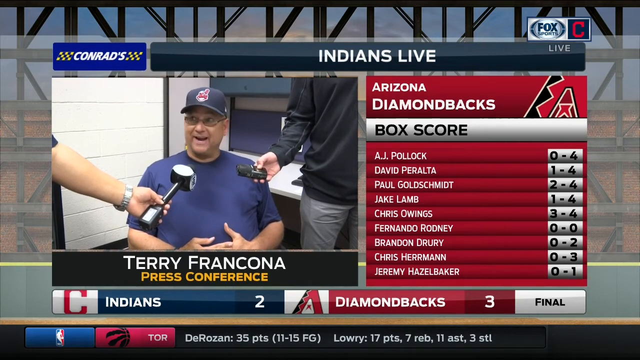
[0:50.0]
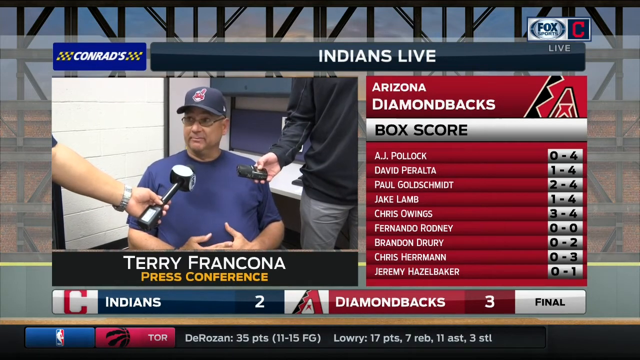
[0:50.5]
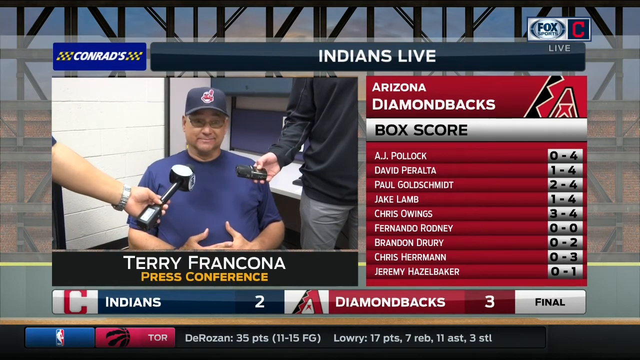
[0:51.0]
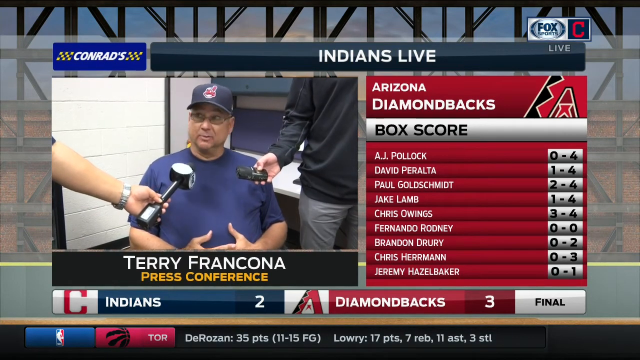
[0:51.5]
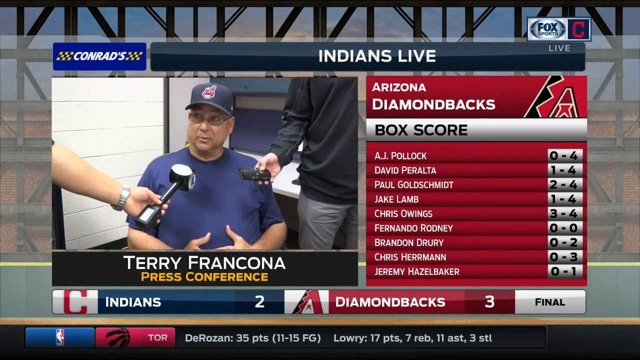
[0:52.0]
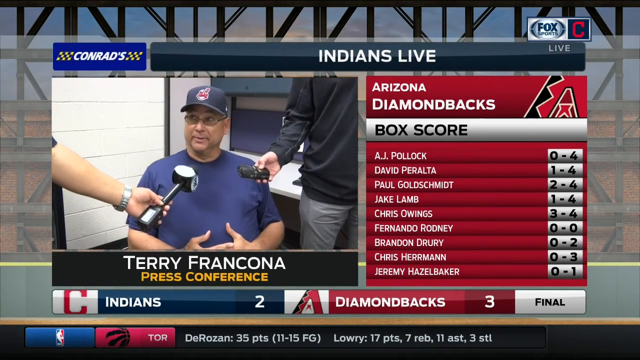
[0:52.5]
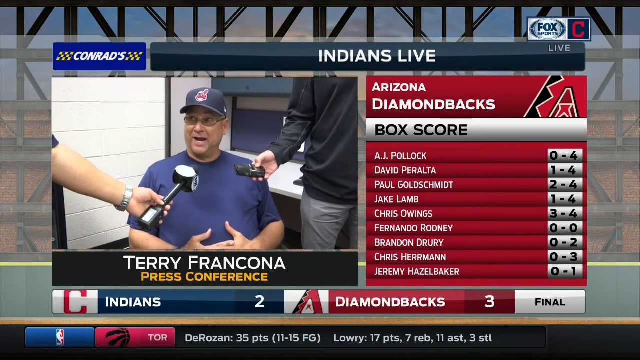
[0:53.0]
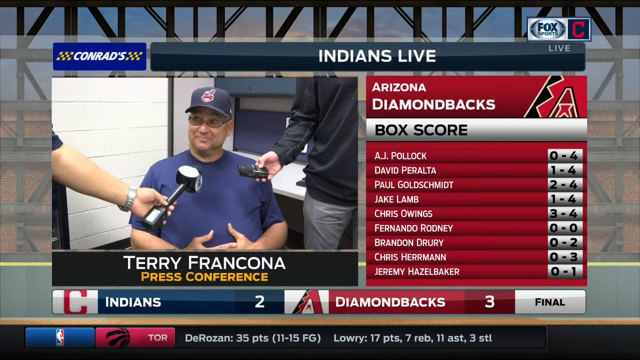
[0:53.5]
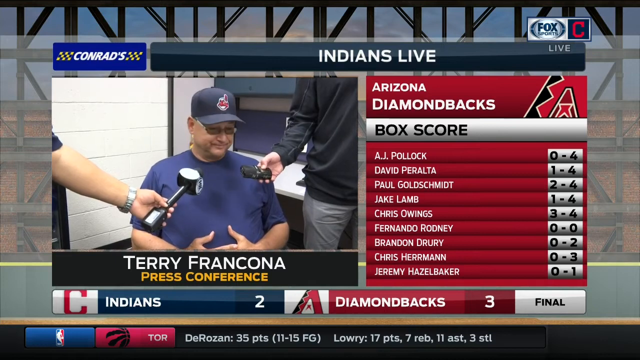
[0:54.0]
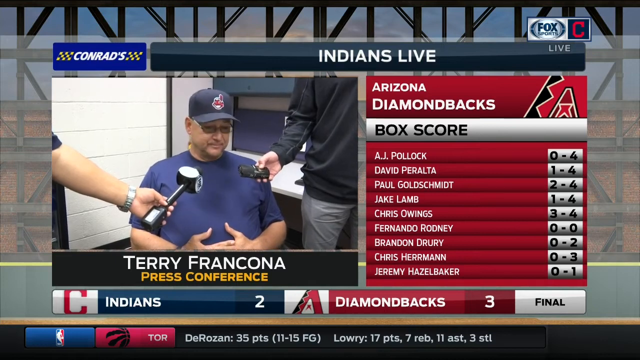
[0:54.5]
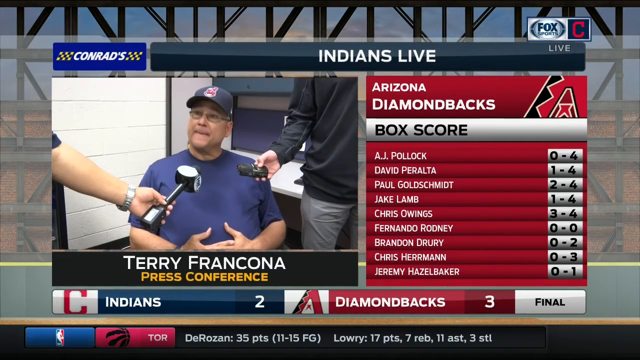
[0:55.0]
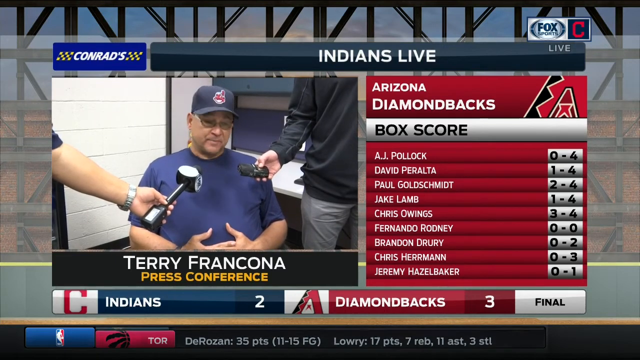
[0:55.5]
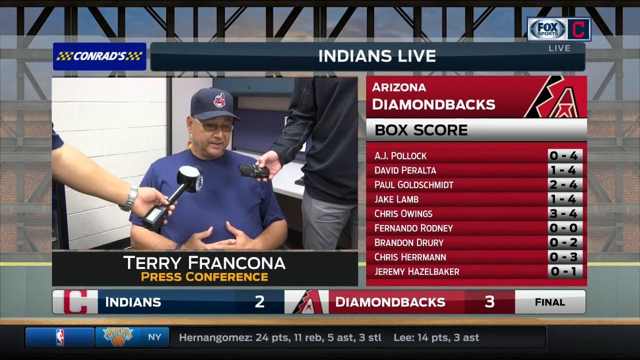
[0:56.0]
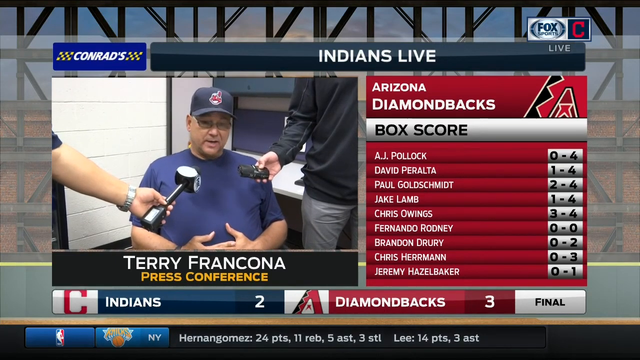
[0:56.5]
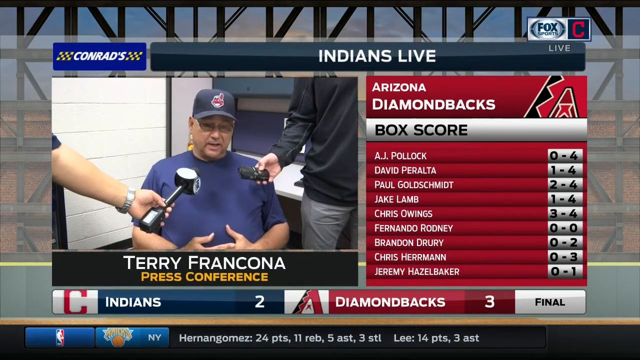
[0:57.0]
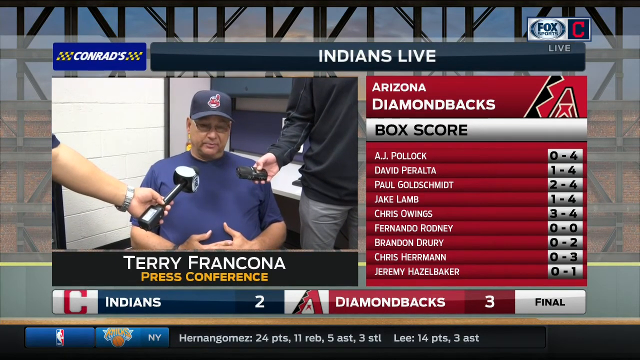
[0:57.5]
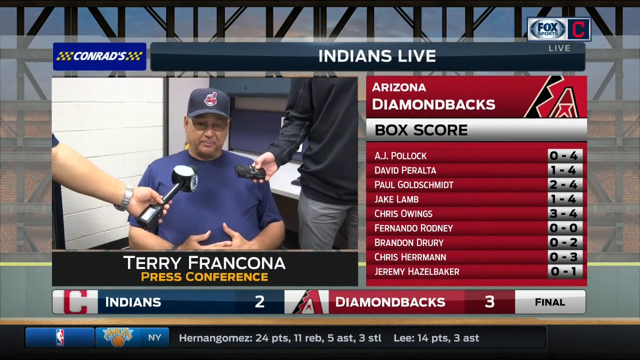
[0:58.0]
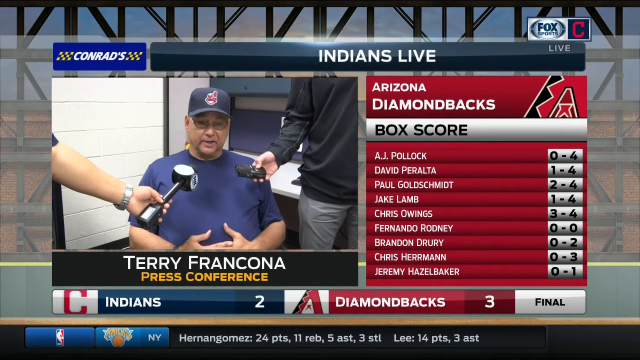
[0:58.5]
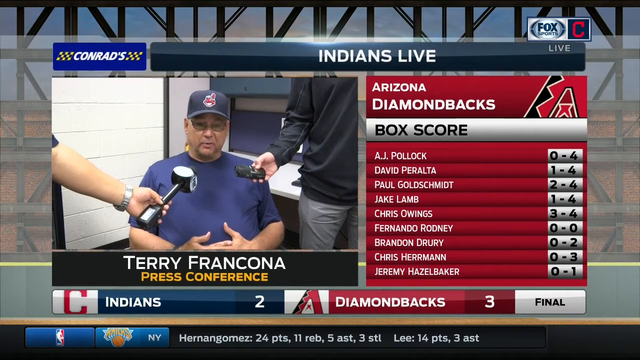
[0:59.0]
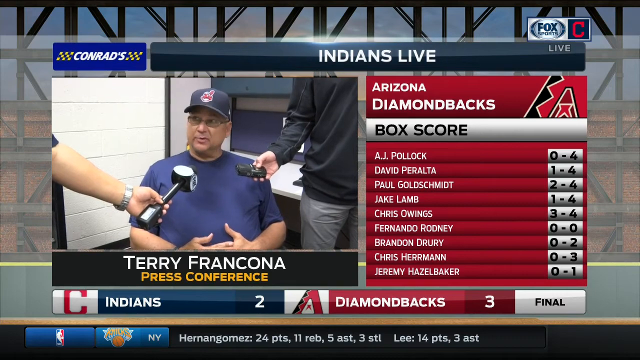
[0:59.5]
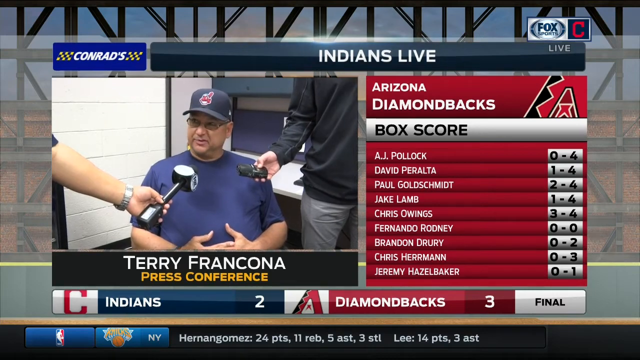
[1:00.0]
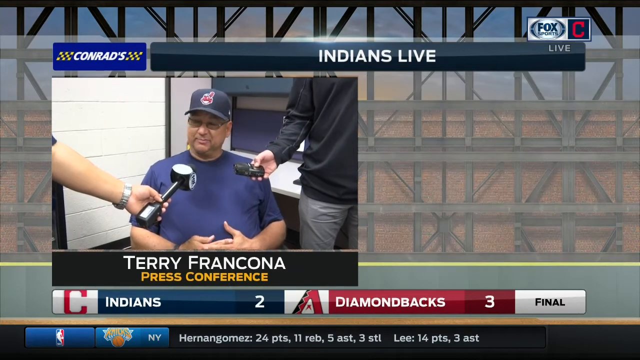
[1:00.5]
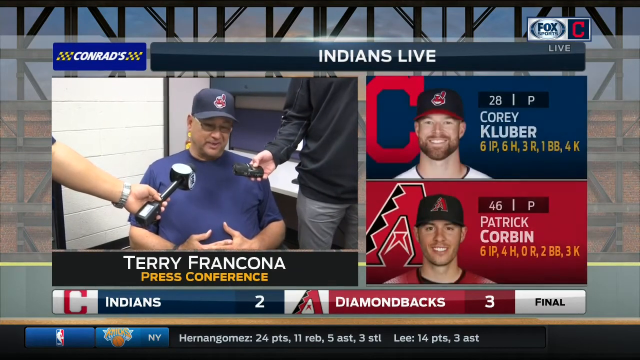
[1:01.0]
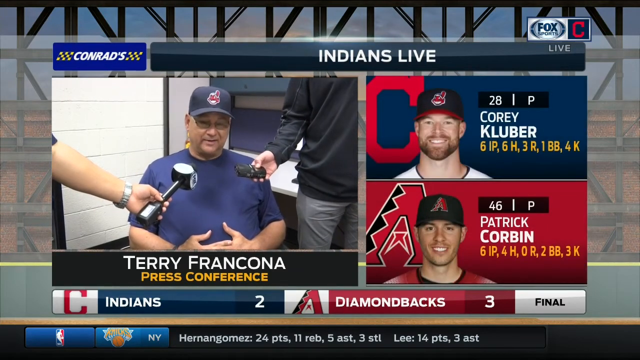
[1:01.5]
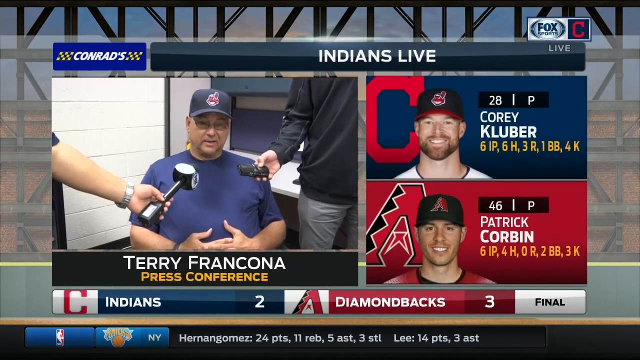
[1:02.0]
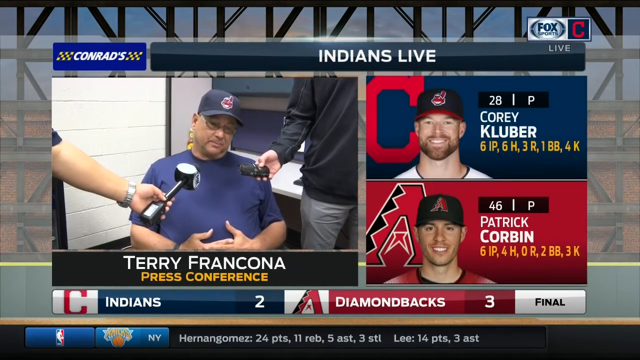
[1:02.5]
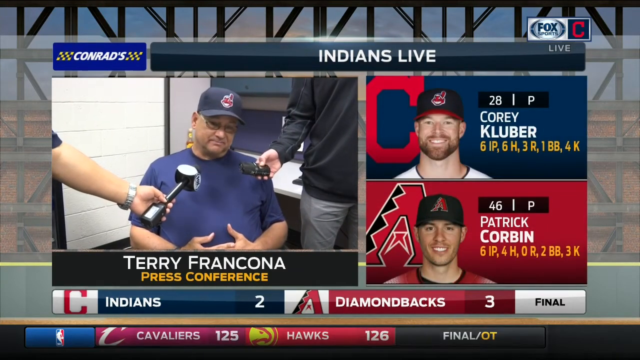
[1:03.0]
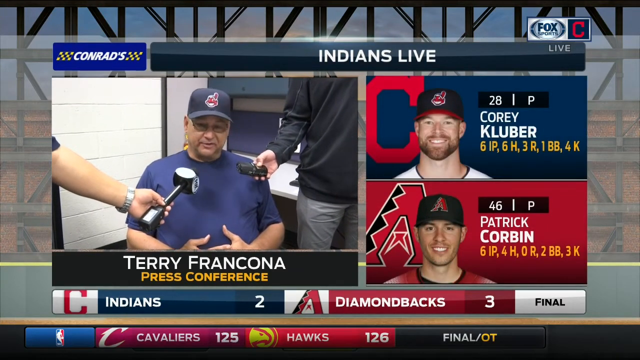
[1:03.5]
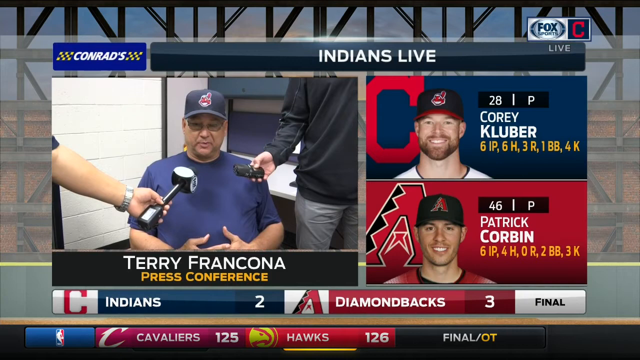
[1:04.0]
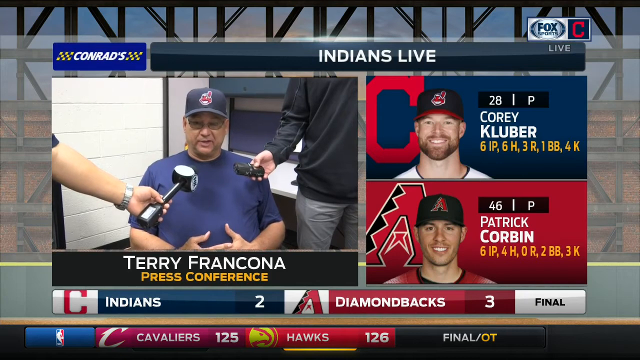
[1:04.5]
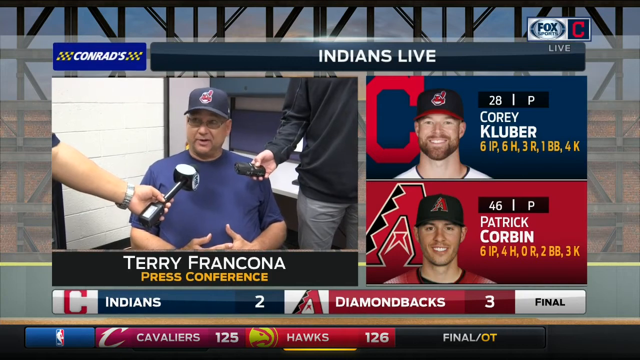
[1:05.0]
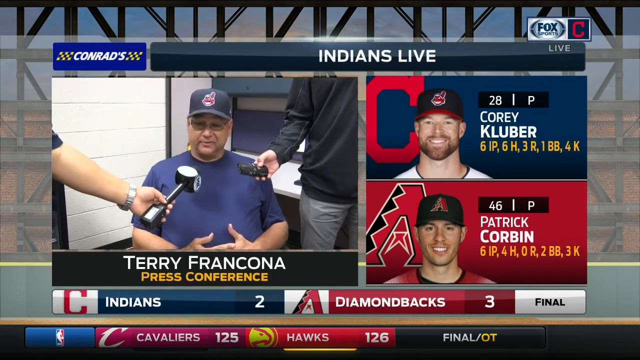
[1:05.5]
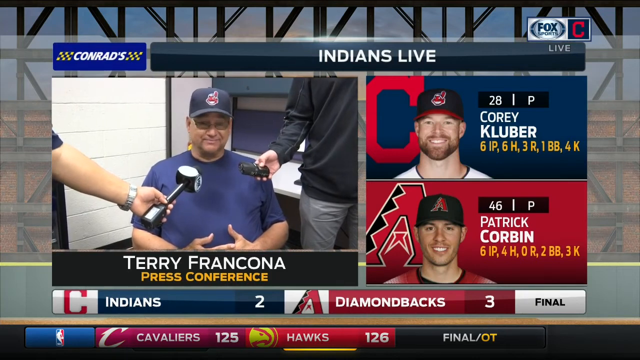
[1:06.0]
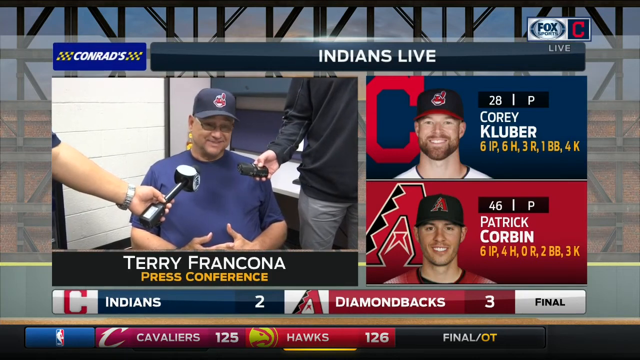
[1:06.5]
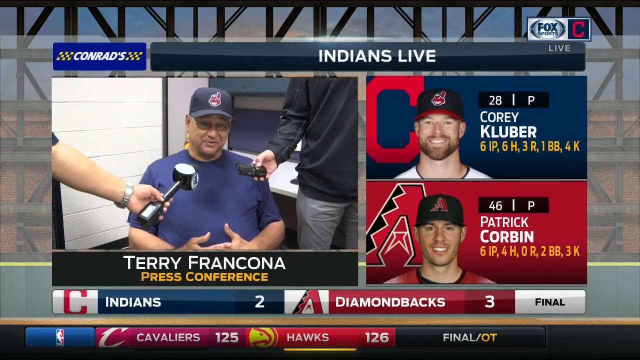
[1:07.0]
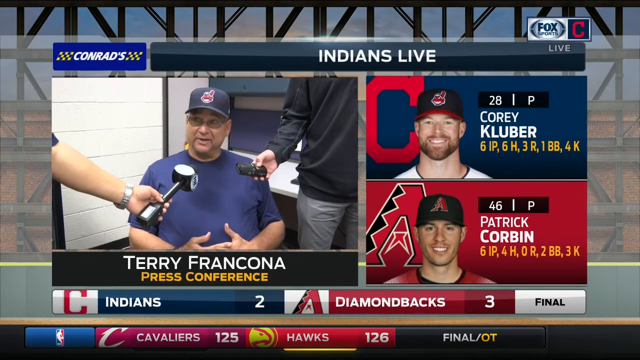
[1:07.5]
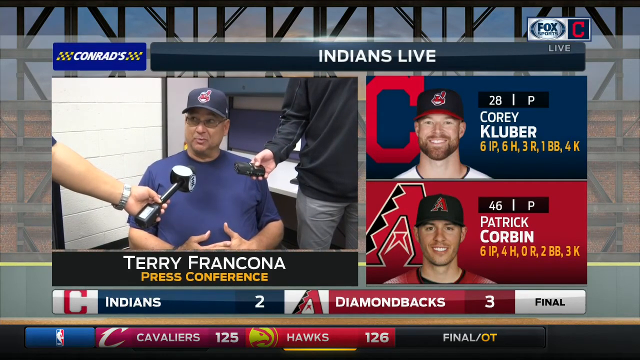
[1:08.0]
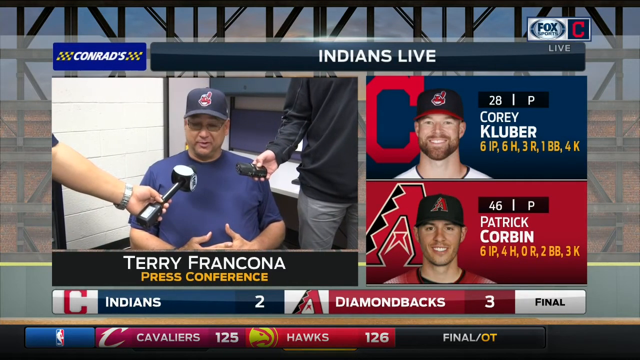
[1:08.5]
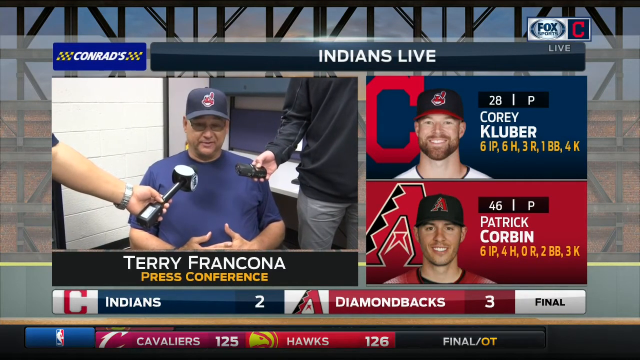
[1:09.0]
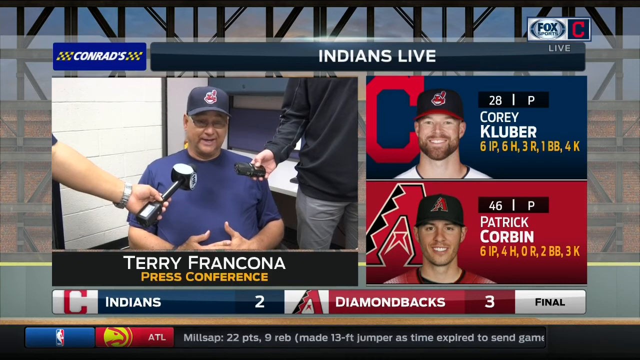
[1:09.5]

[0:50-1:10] The press conference with Terry Francona continues after his Cleveland Indians lost to the Diamondbacks 3-2. Francona sits in a chair with reporters standing on either side of him. He wears glasses, a blue shirt, and a Cleveland Indians hat, and holds his hands as though twiddling his thumbs while he talks. He looks down at the smaller microphone, keeps talking, and looks up at the other reporter. The two starting pitchers are then compared: Corey Kluber pitched six innings, giving up six hits, three runs, and a base on balls, with four strikeouts; Patrick Corbin also pitched six innings, giving up four hits and zero runs, with two walks and three strikeouts. Francona keeps talking as the reporters stand there. The reporter with the bigger microphone wears a watch on his left hand and a short-sleeved shirt; the other reporter wears a long-sleeved black shirt and gray pants.